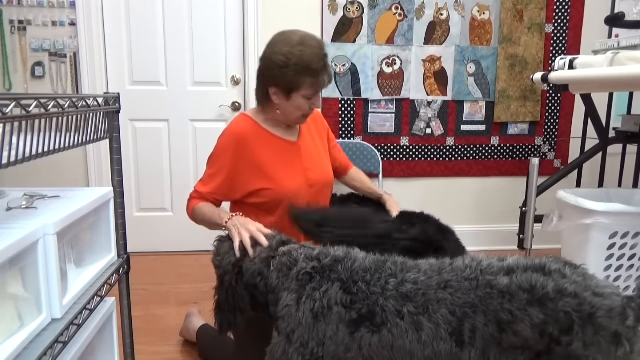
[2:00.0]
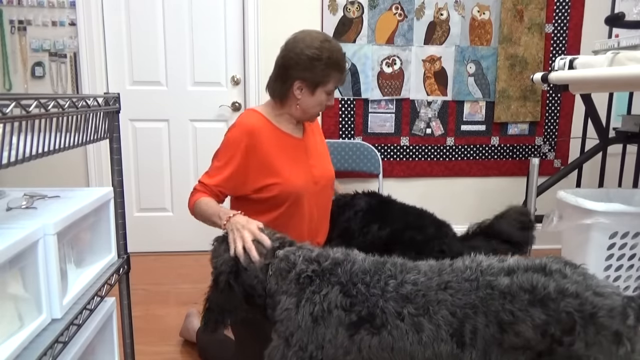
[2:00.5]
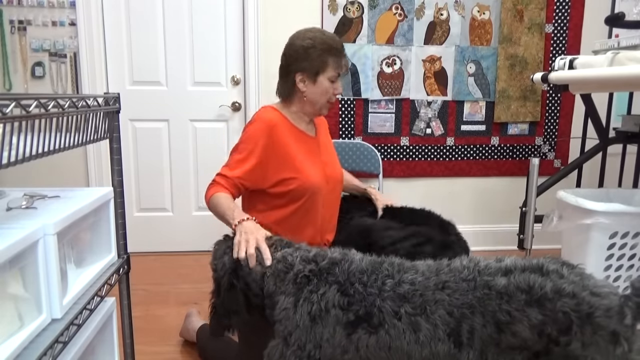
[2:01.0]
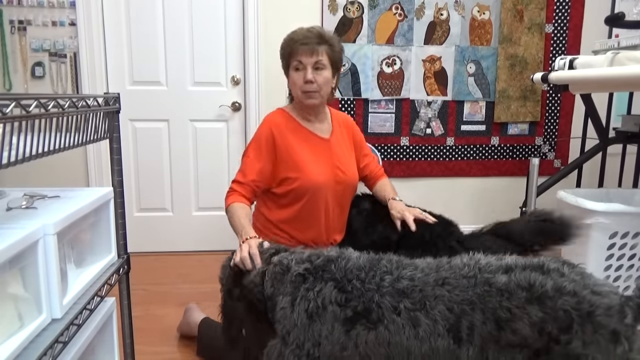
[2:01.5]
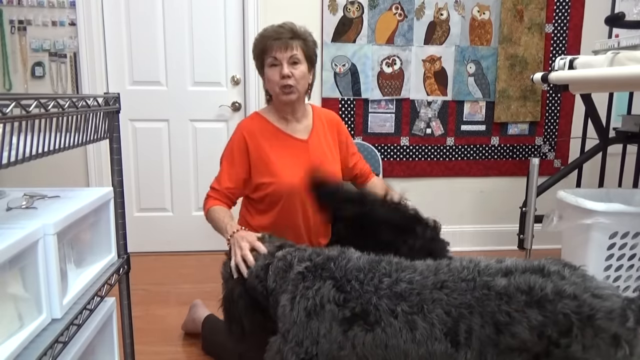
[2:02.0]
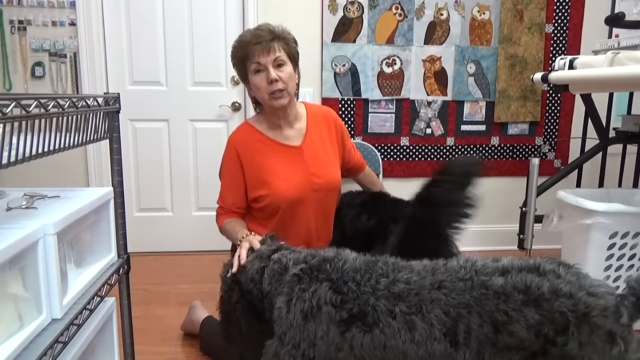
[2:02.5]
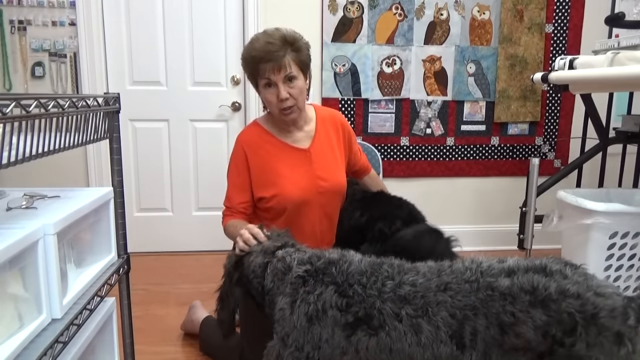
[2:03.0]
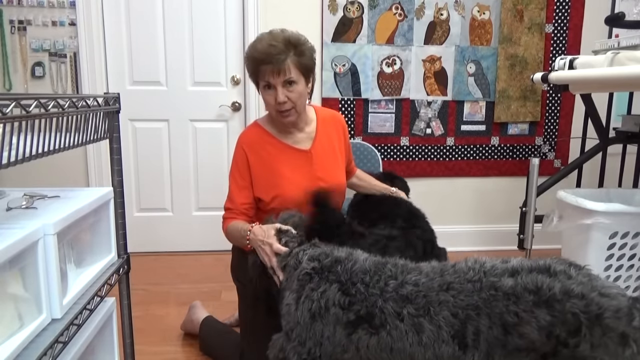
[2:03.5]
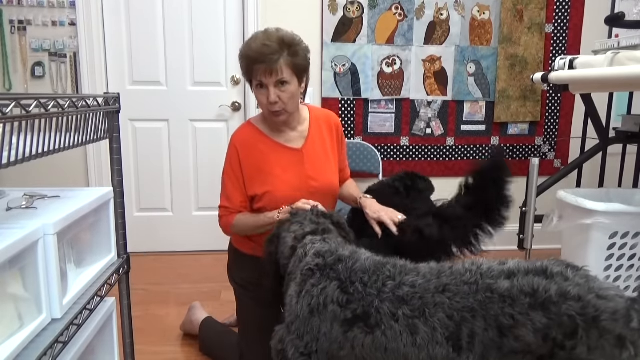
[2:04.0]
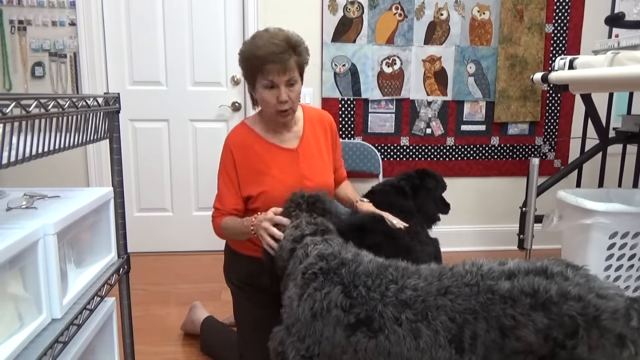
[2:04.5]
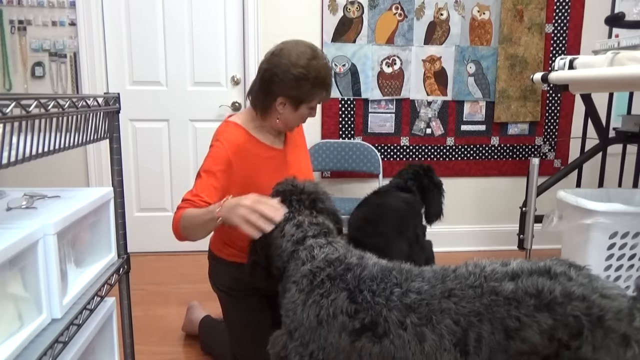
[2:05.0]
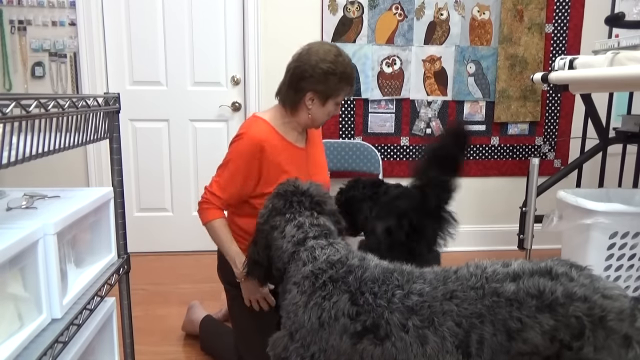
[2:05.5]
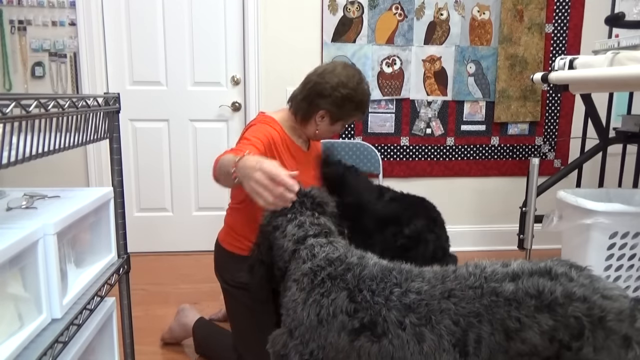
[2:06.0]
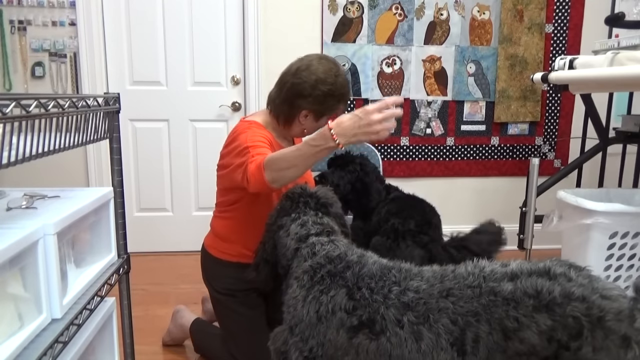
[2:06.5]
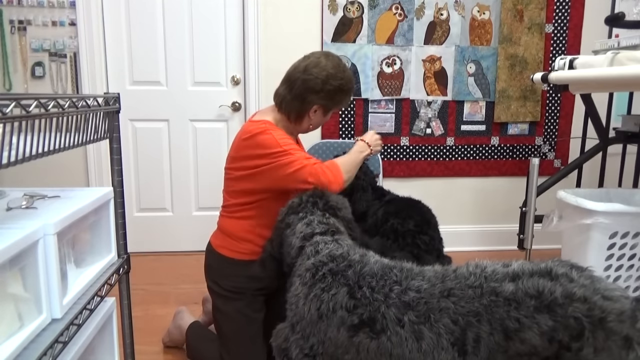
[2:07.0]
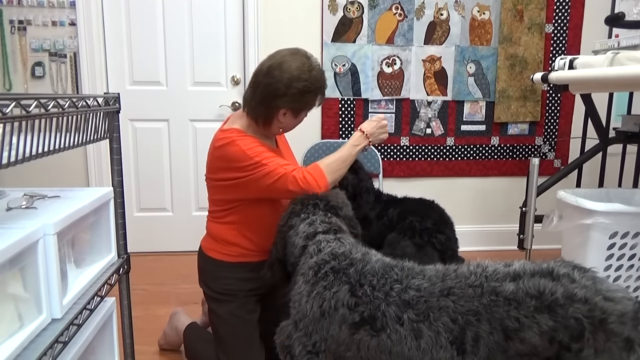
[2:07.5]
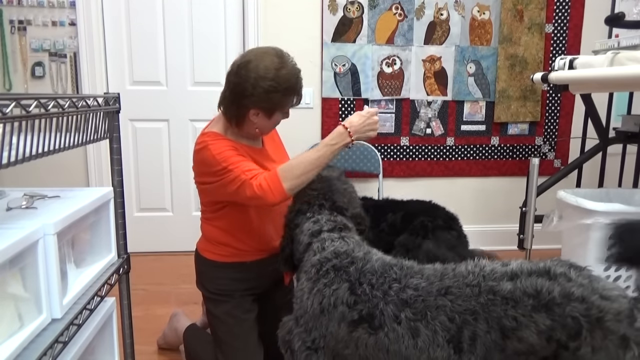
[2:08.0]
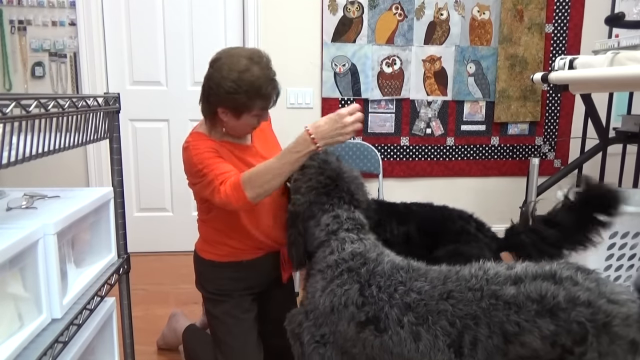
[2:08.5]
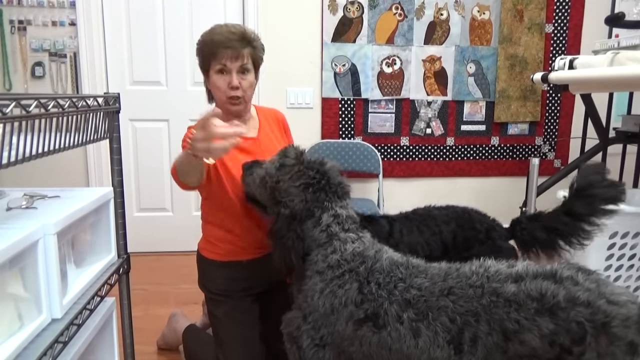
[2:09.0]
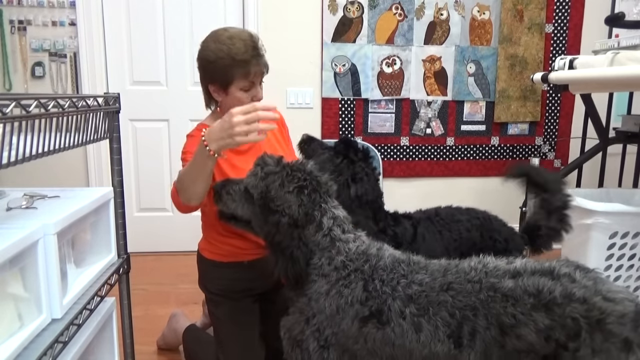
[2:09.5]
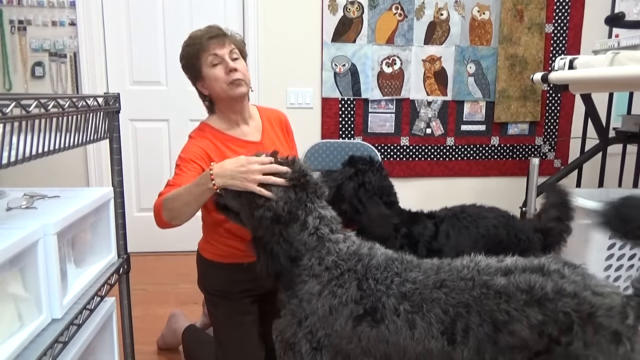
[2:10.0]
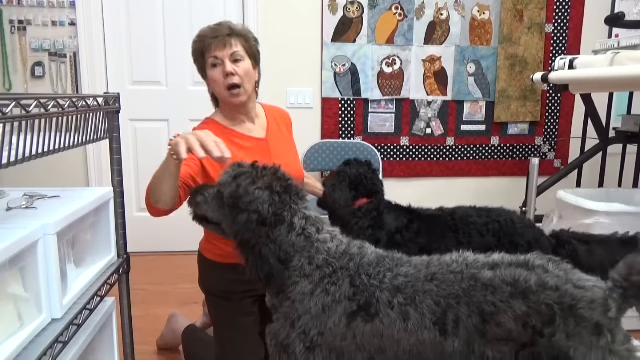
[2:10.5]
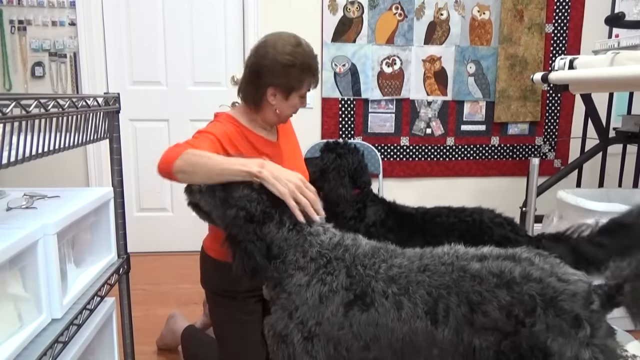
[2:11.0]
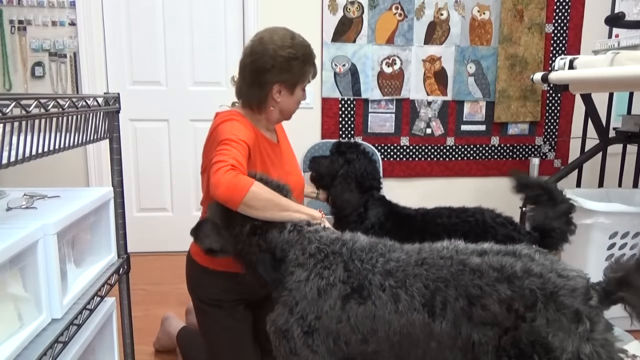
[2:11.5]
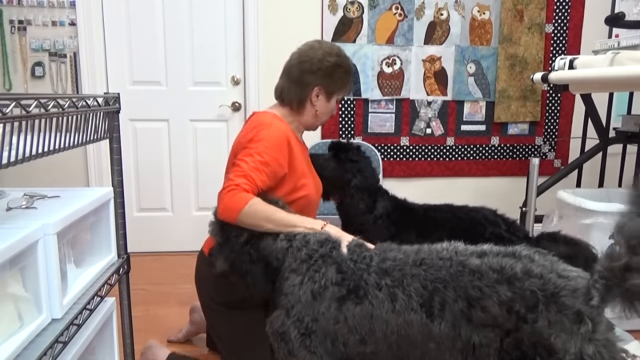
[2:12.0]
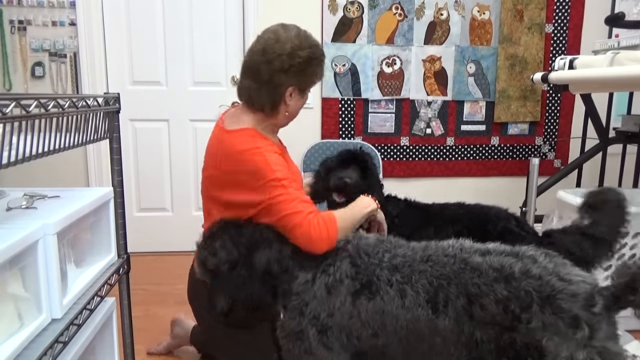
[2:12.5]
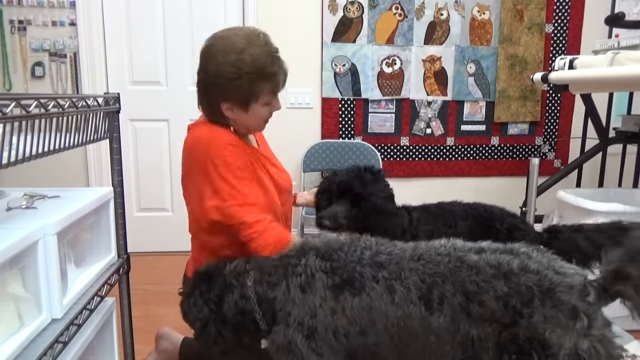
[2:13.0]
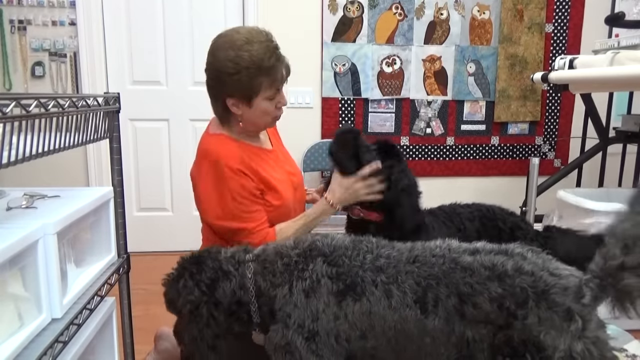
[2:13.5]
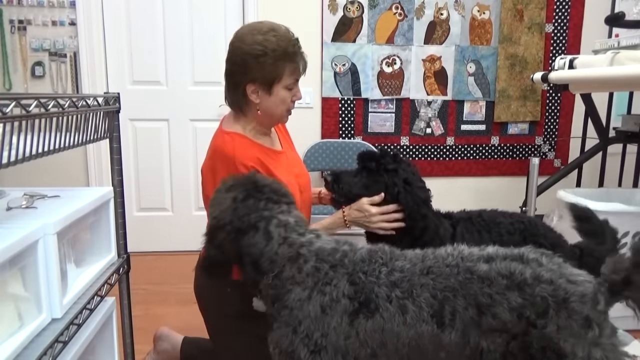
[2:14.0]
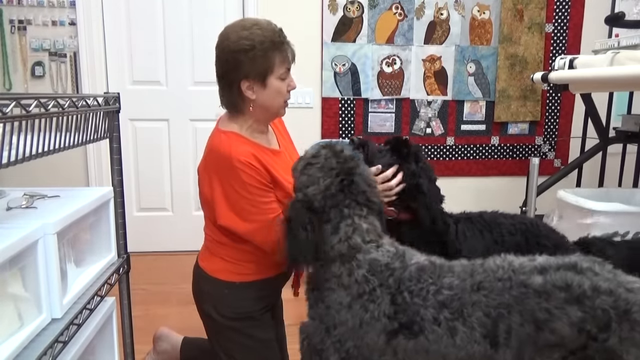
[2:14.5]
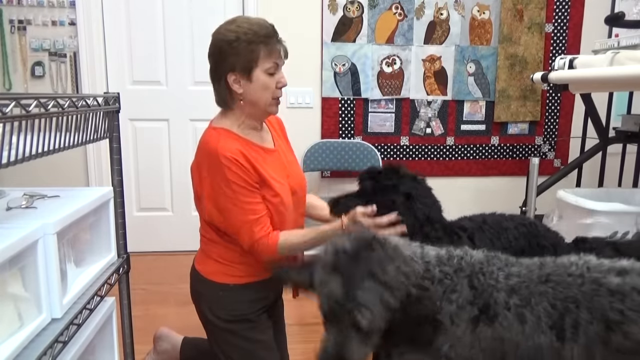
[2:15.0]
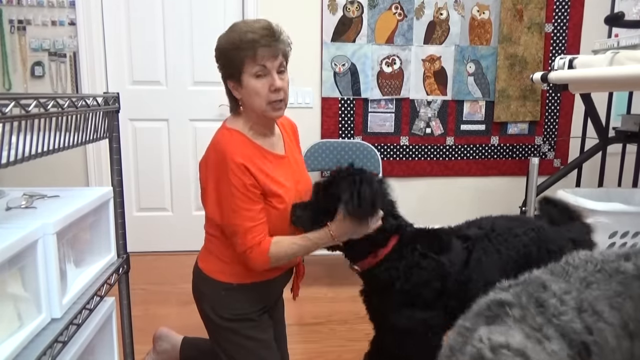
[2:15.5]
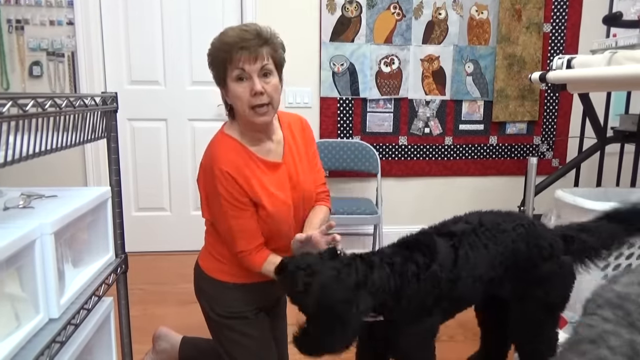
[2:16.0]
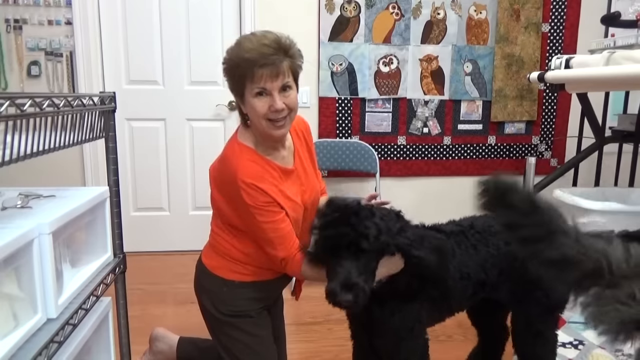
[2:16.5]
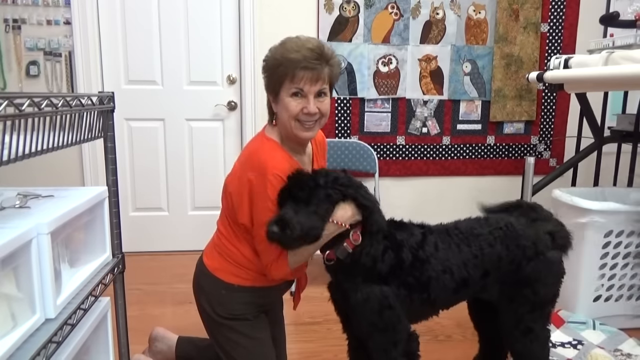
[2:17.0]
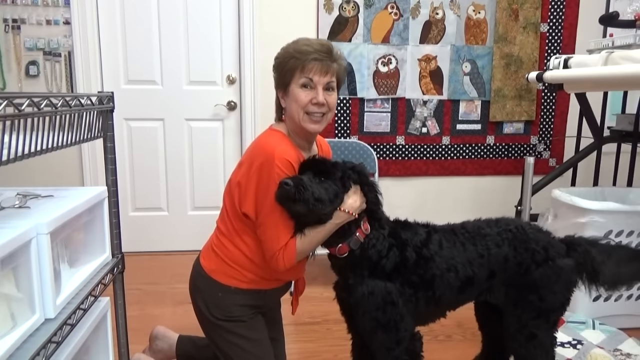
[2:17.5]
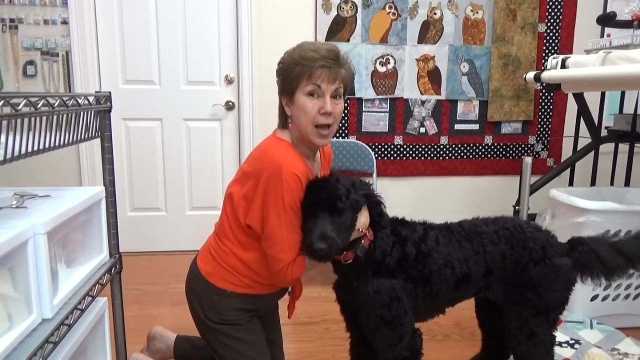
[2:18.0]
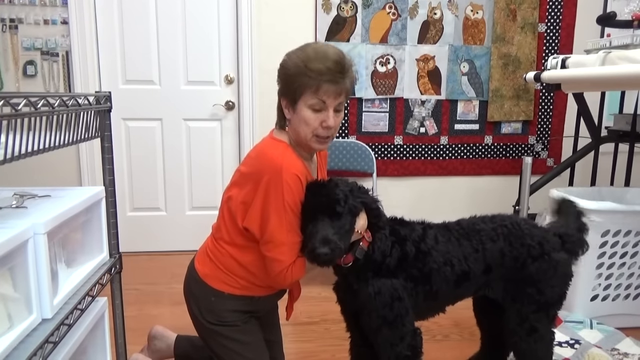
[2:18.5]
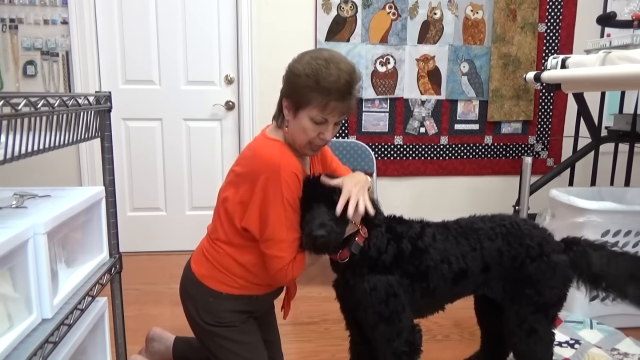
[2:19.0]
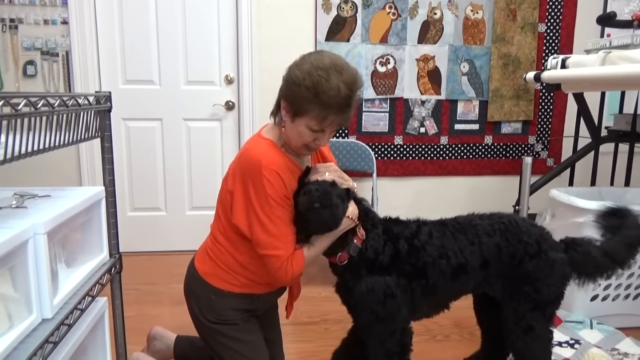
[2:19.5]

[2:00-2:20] Still on her knees, the woman seems to be directly in front of the black lab, while the brighter one is off to the side, looking at her. She rubs the black lab's face and head; he looks like he is trying to escape but also seems very playful. The brighter lab seems to want her attention more than the other one, maybe a little jealous. While she is rubbing the dogs, the shot stops.